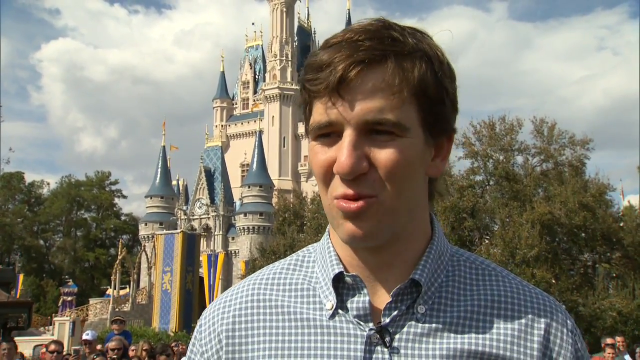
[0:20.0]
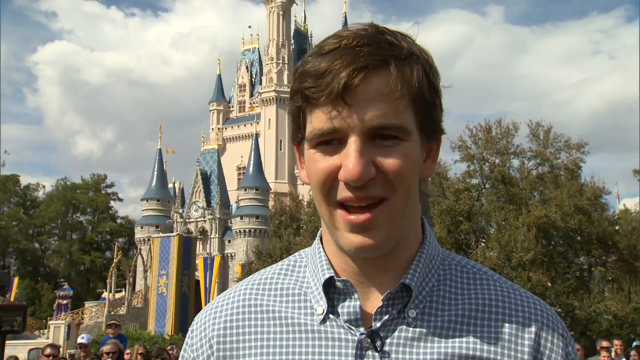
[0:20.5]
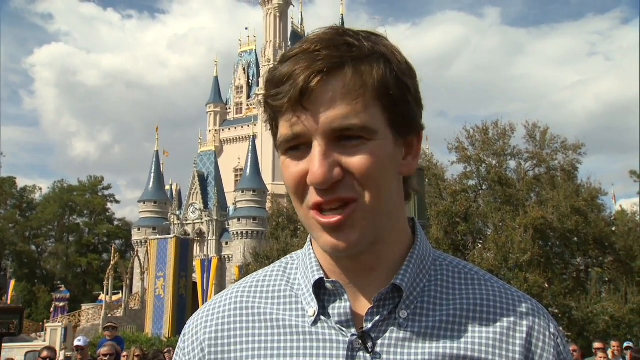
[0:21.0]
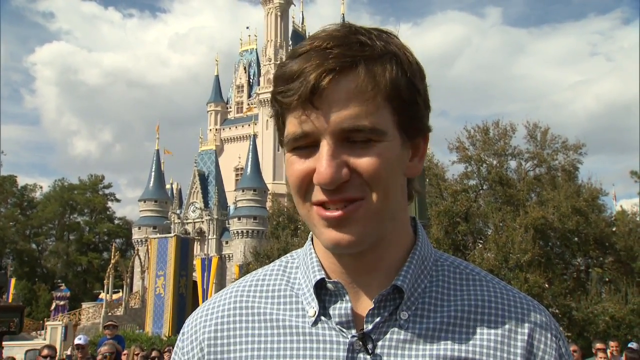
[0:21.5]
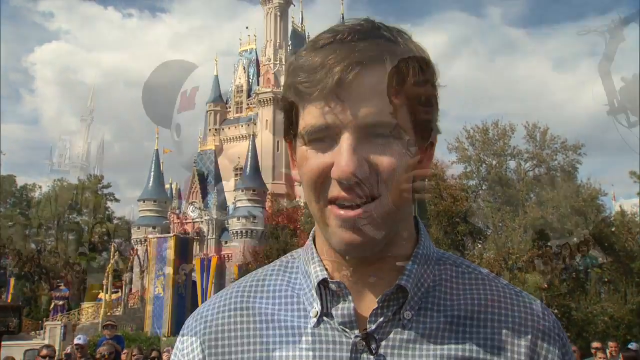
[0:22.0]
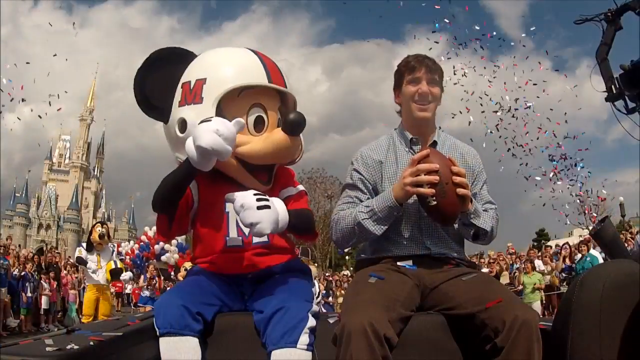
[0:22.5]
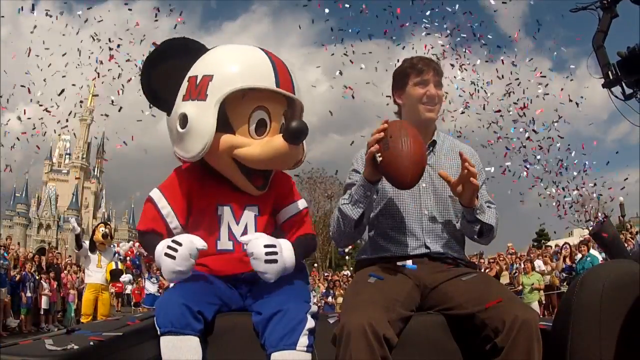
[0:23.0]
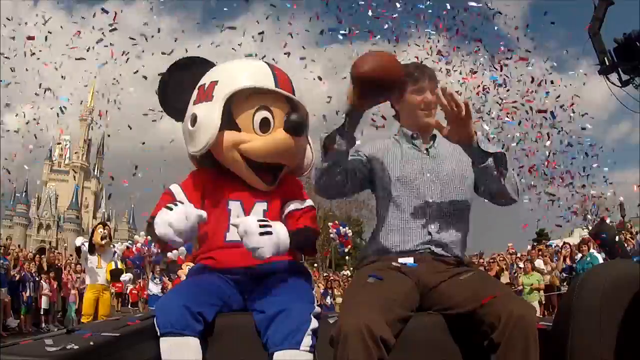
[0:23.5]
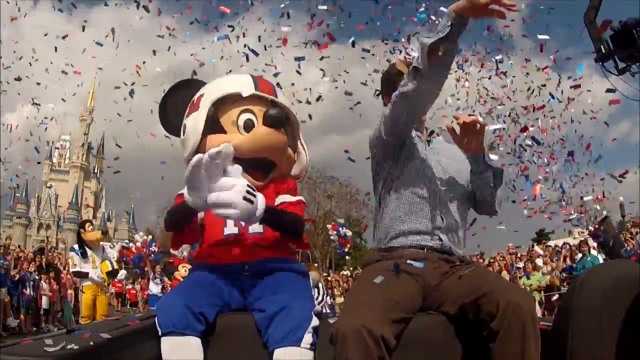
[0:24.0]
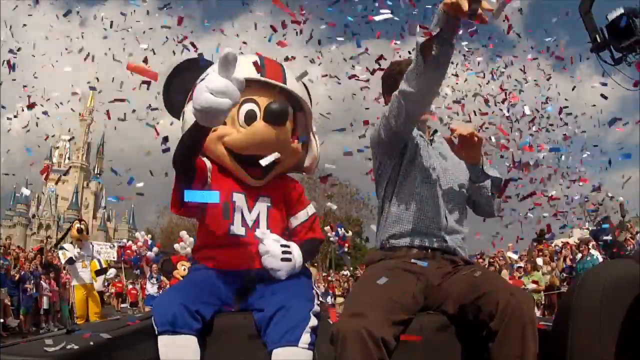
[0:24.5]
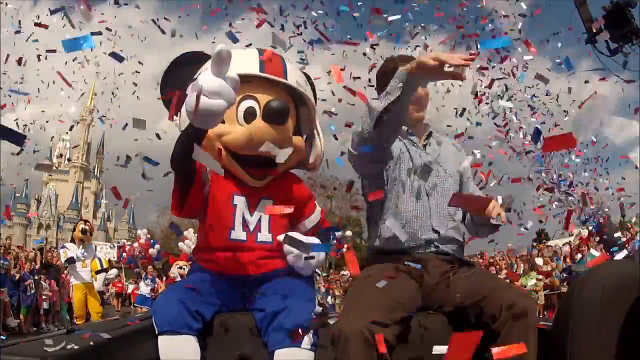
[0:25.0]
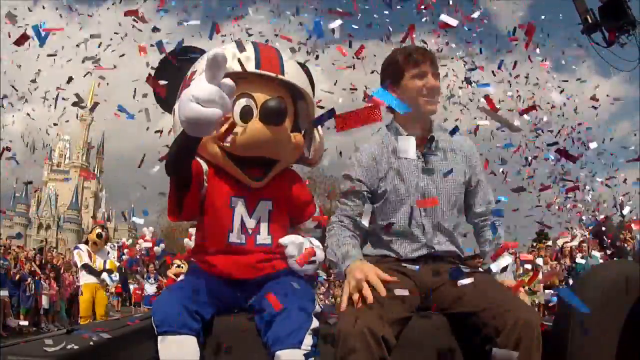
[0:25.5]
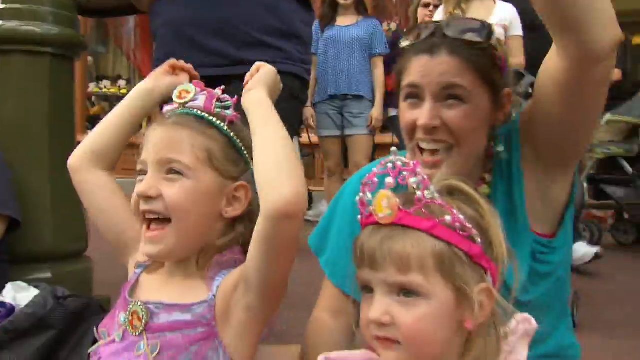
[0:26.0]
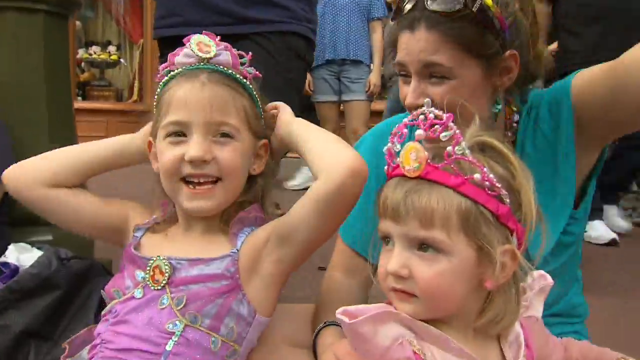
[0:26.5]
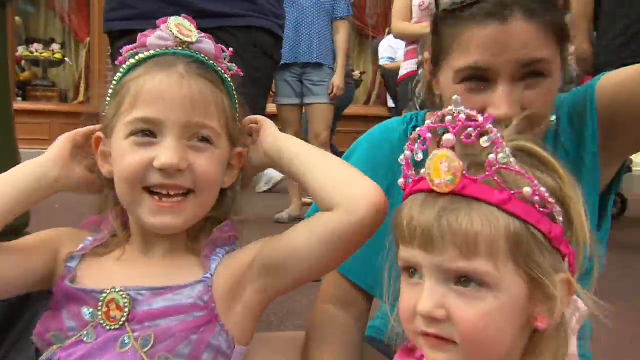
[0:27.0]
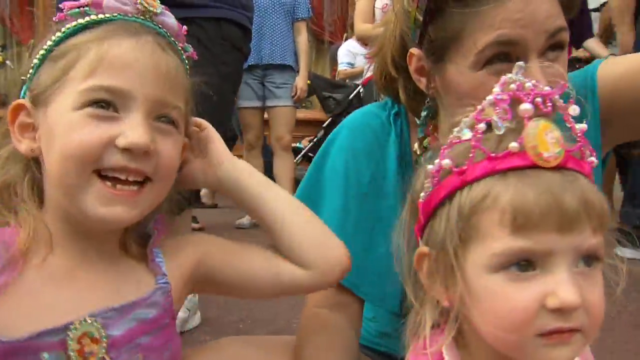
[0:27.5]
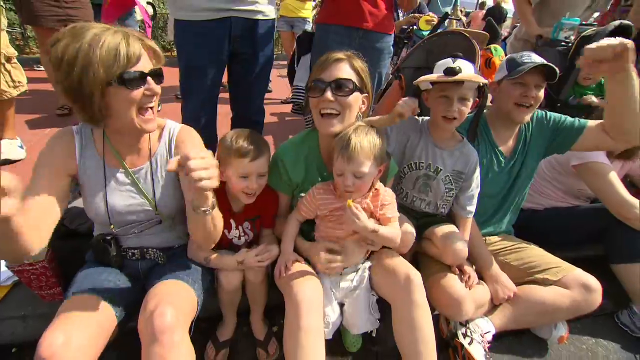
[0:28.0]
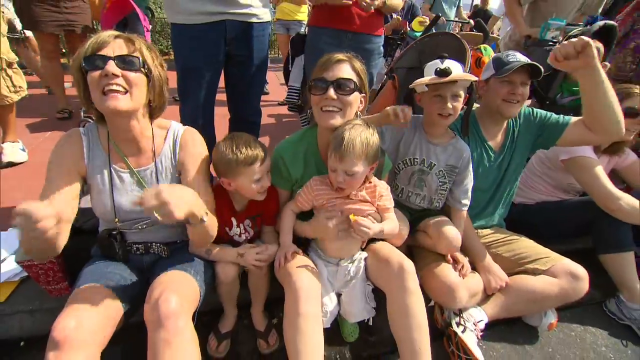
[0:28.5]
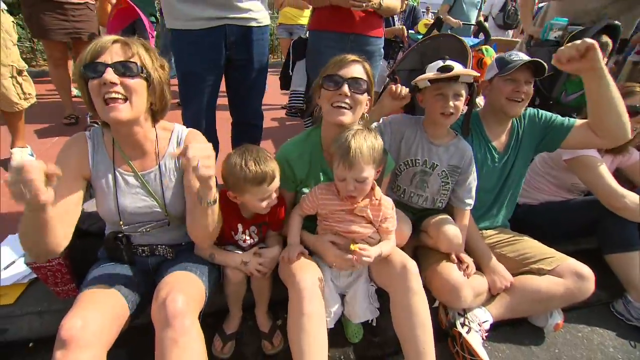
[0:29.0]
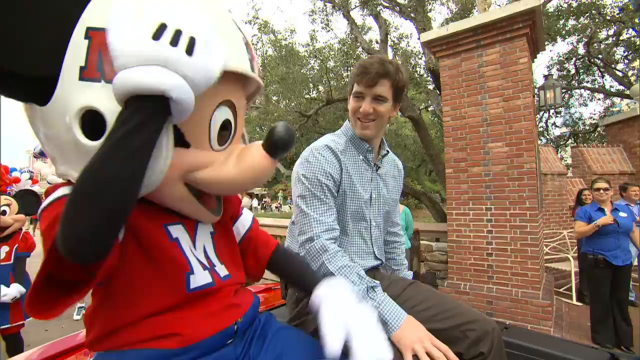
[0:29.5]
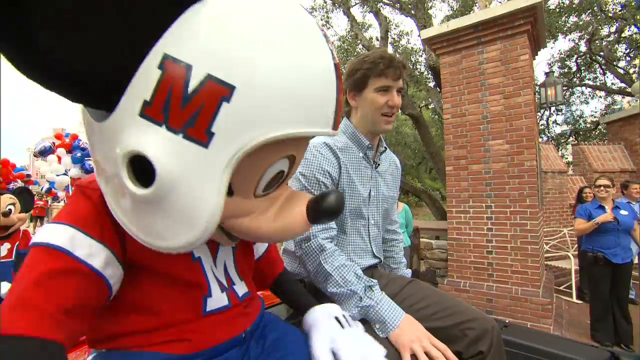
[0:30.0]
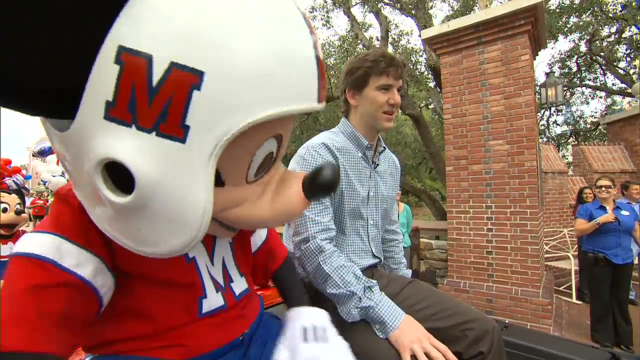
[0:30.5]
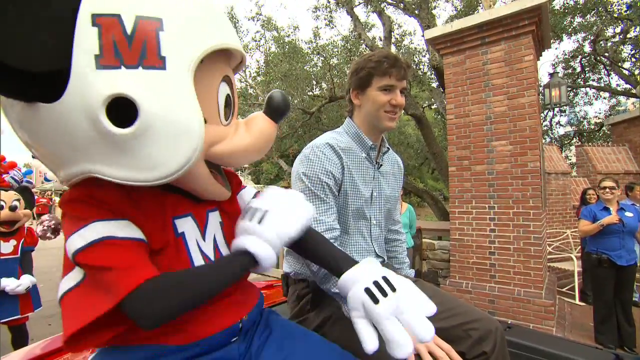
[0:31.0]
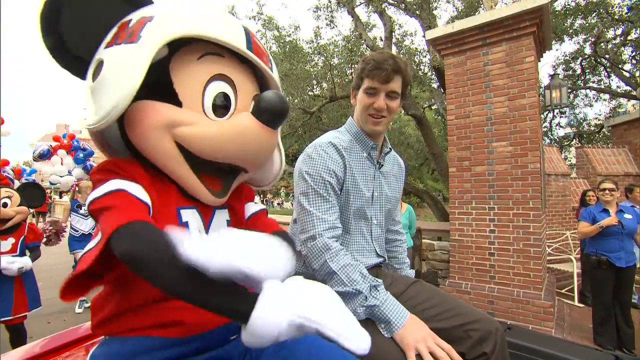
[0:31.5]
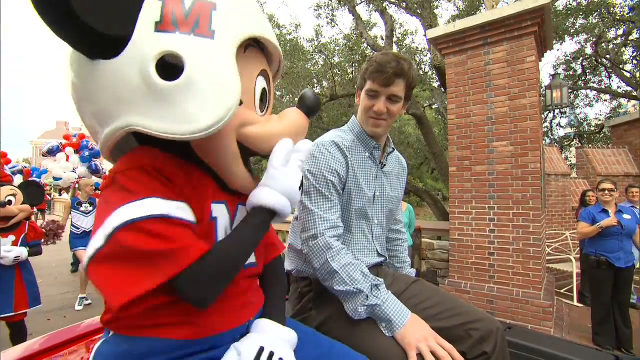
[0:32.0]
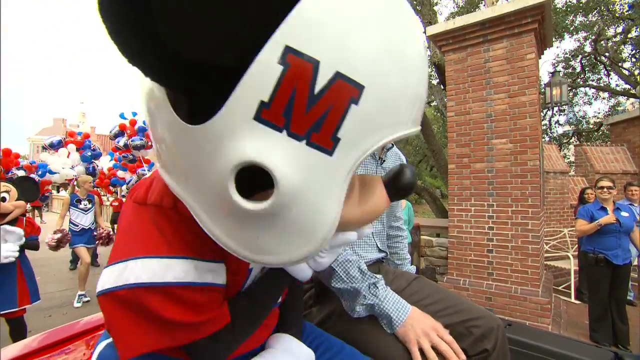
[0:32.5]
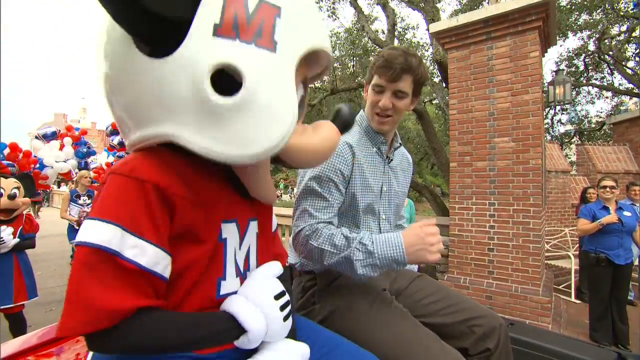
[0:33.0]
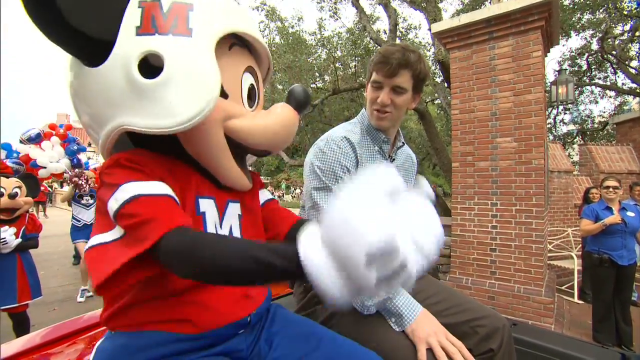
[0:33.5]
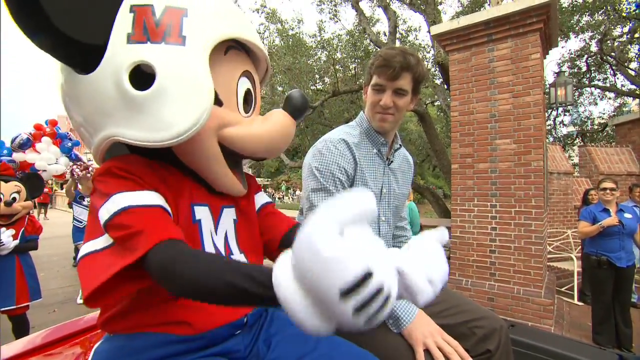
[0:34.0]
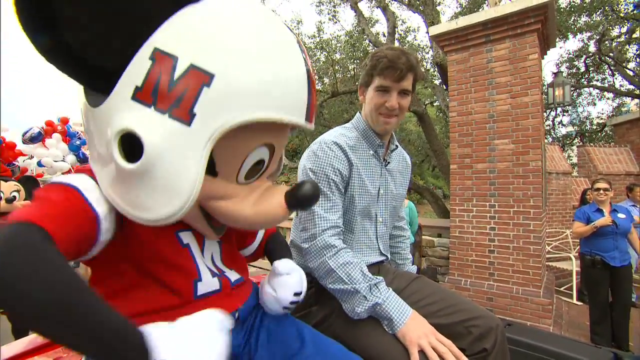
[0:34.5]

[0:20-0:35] Eli Manning apparently continues to be interviewed, standing there talking and smiling for a few moments. The scene transitions back to him and Mickey sitting, with Eli Manning holding a football. He throws it forward, and red, white, and blue confetti starts raining down on both of them. Next, a couple of young girls and presumably their mother smile and look around. Another group of six people, which looks like three adults and three children, are kind of pumping their fists and mostly smiling. Eli Manning and Mickey are seen sitting again; he talks while Mickey kind of fidgets, cleaning off his arms and putting his hand over his mouth. Mickey also gestures with his arms to show that he is strong, kind of as if flexing. Behind Mickey, Minnie Mouse can be seen in the distance, with more red, white, and blue balloons in the background. There are some people in the lower right.